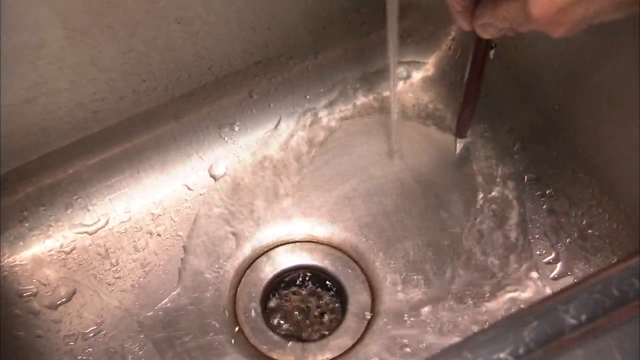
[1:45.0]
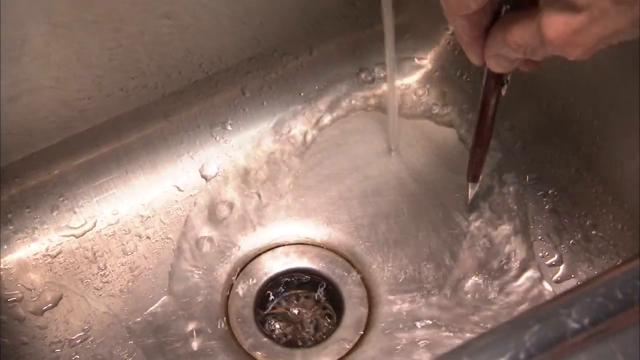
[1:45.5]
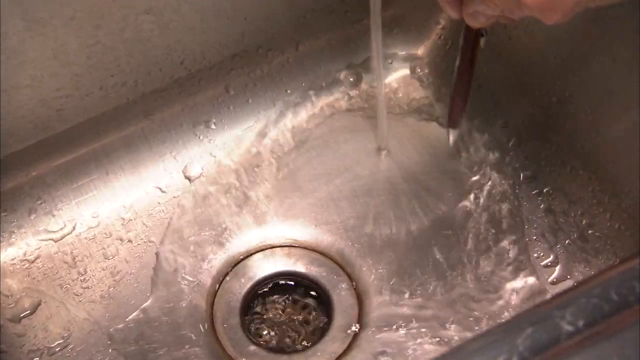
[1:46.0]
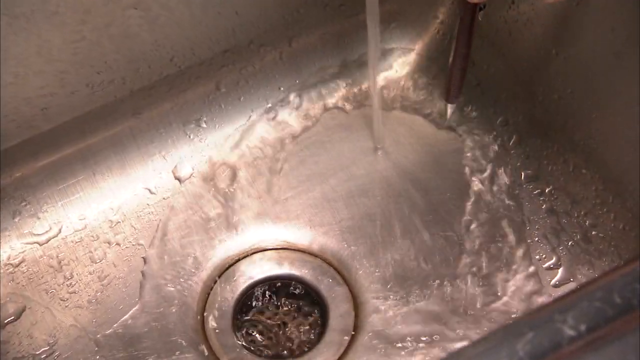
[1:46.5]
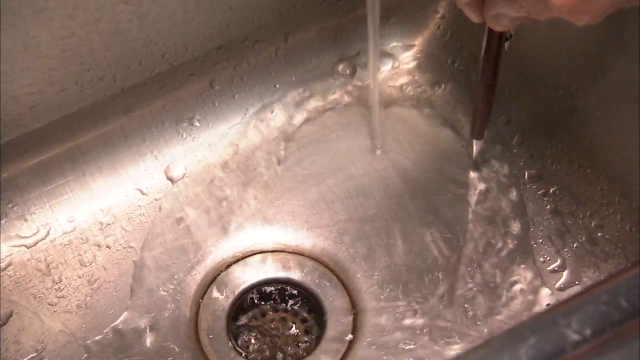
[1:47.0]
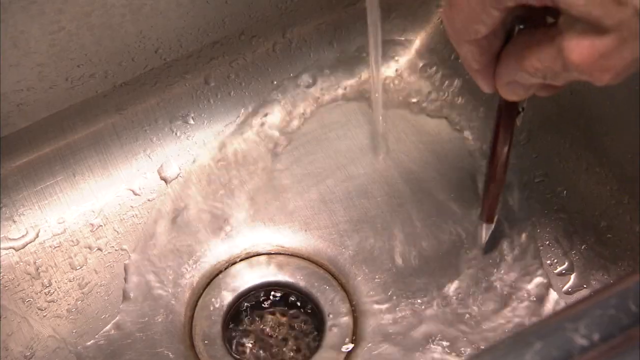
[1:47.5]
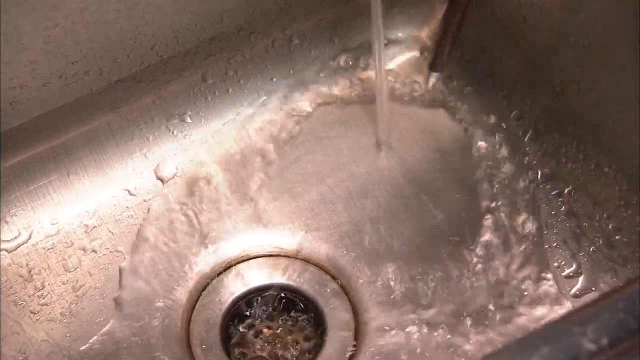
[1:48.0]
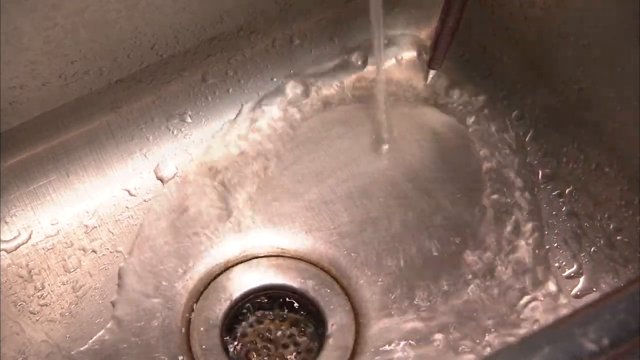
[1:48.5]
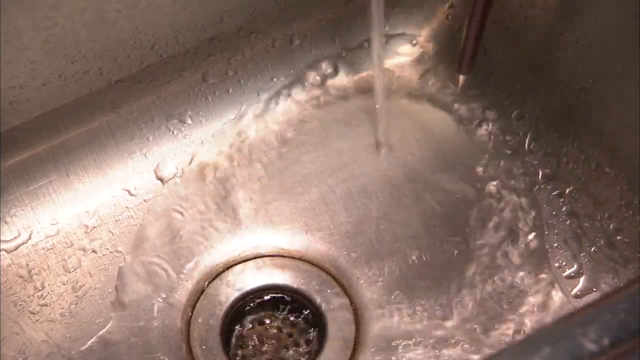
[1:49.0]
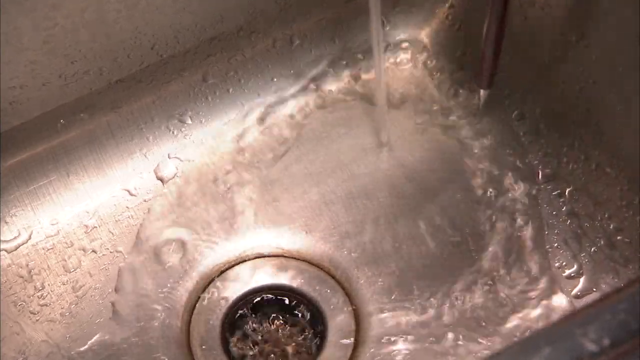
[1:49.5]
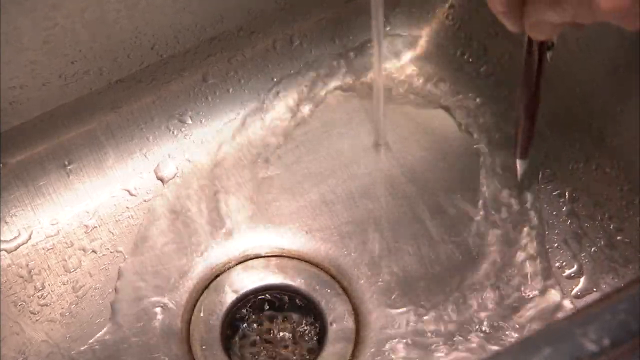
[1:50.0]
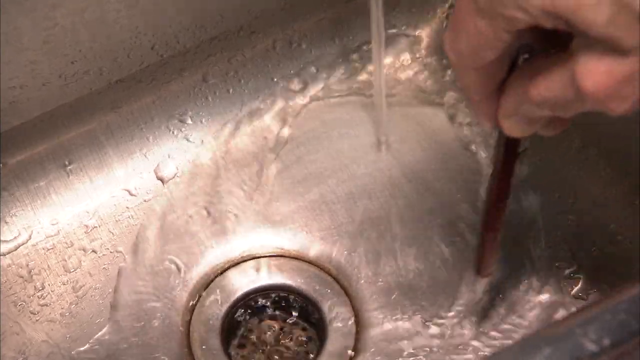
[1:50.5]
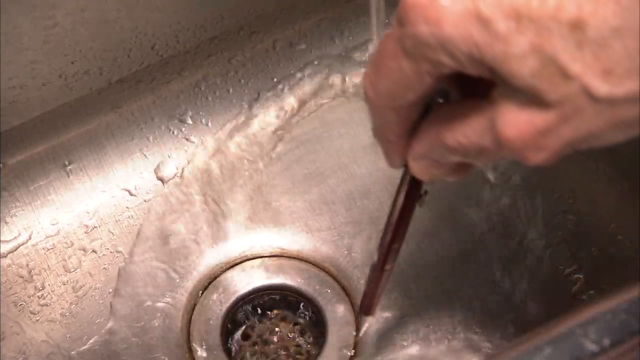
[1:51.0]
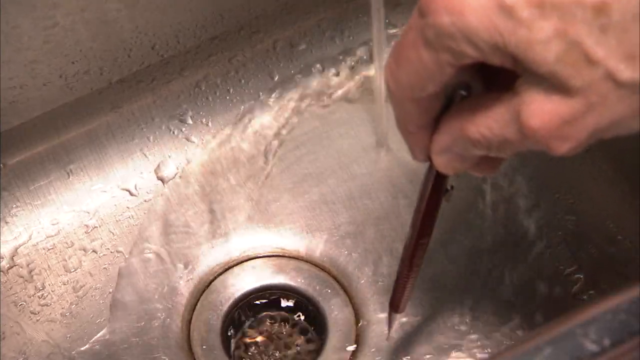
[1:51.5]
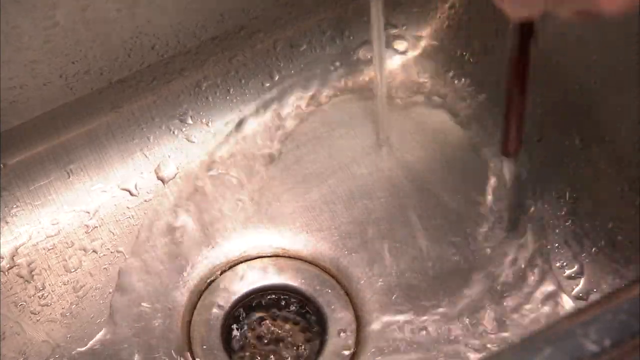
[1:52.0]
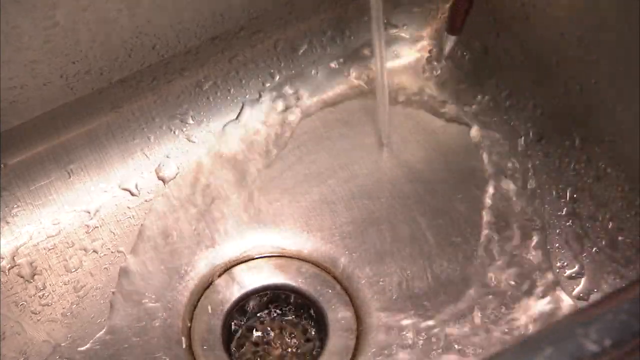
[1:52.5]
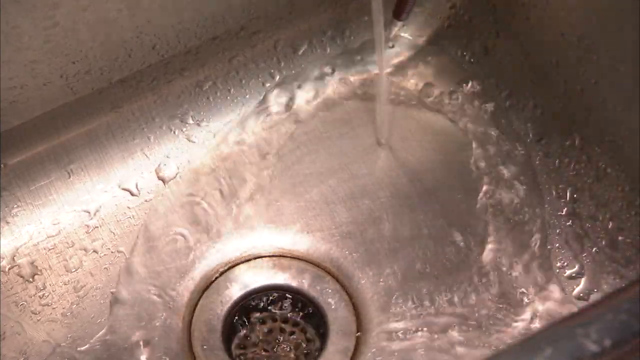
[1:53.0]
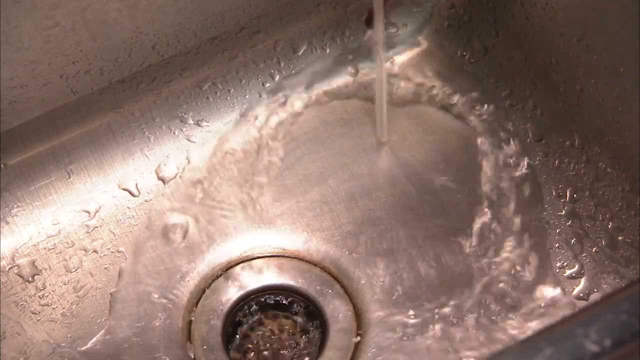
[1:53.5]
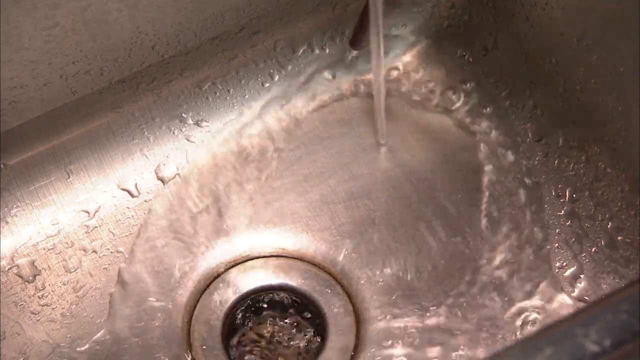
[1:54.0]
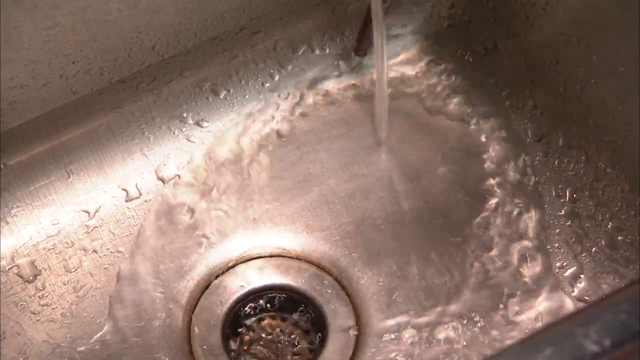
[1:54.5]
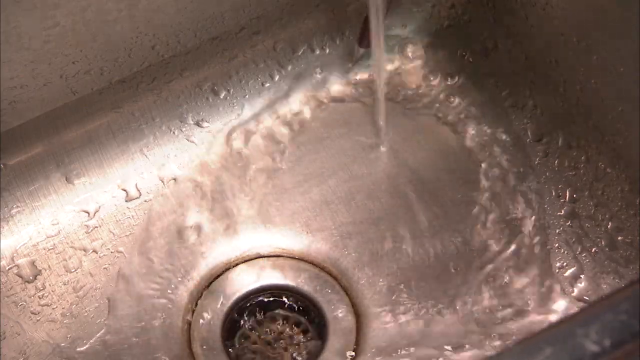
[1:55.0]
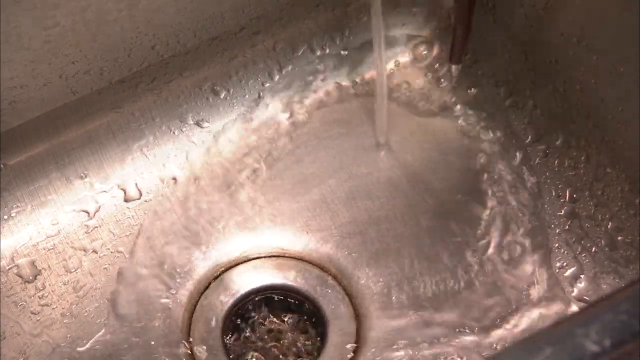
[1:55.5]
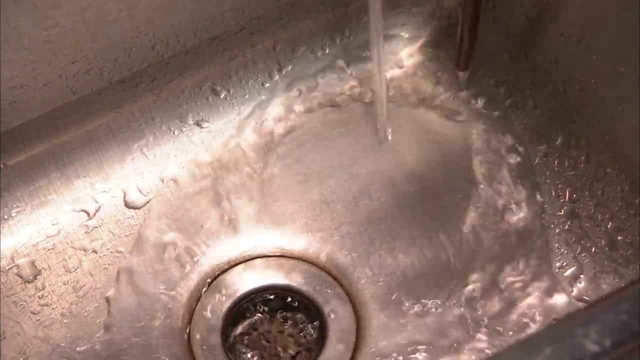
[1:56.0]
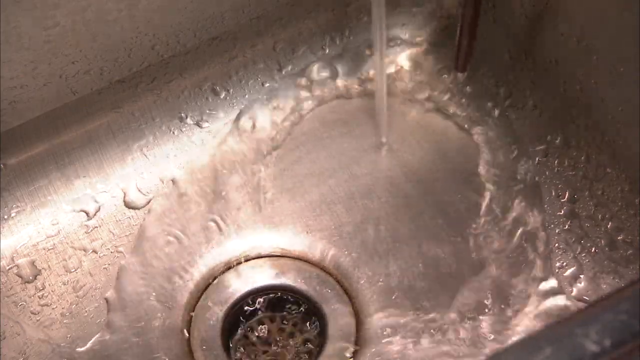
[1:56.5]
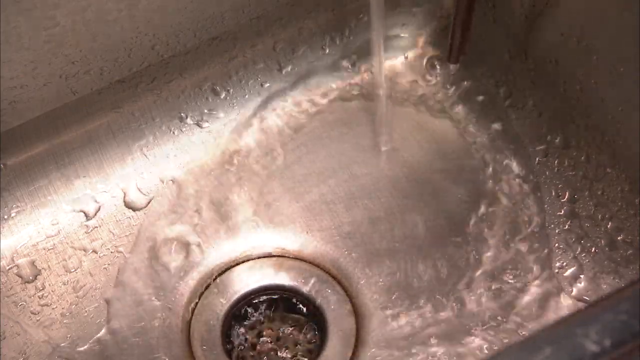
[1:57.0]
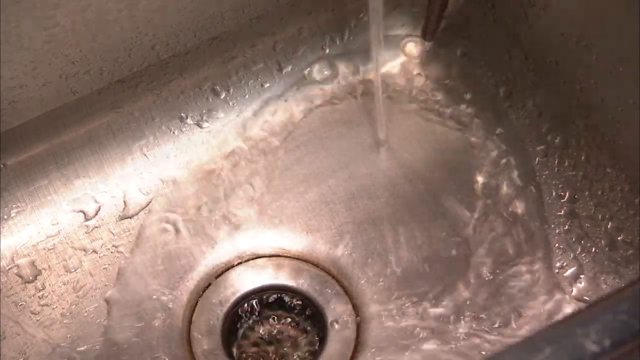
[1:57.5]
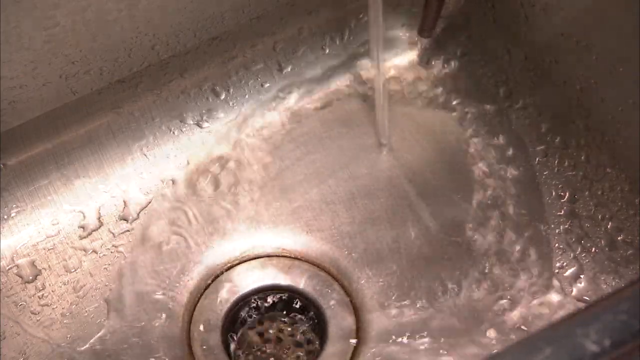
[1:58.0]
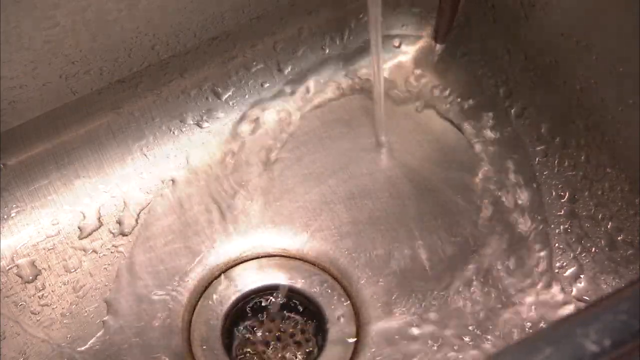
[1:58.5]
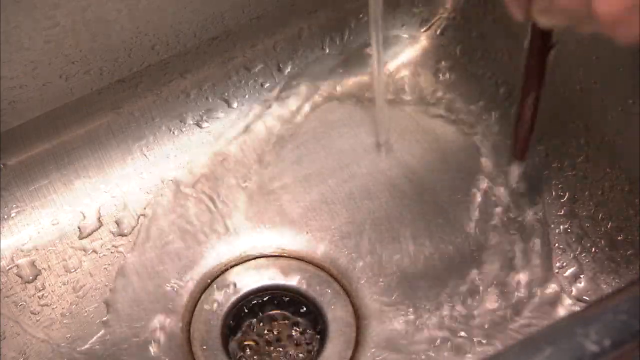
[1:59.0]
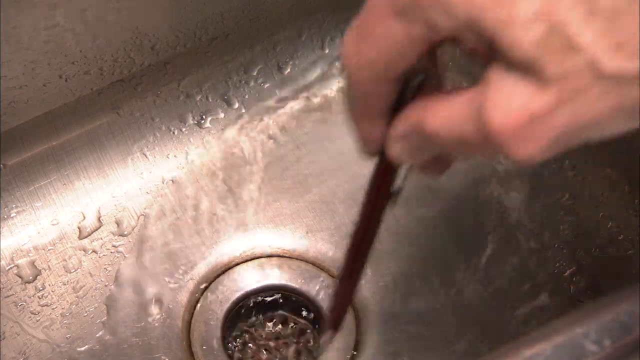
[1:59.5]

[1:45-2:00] Water runs continuously into the sink and down the circular drain; it is a lot of water. A man points to the bubbles in the water with a pen whose body is dark brown and whose tip is a silver-like color. His hand has visible veins and his skin is a peachy beige color. He moves the pen in a C-shaped pattern, mainly toward the right side of the sink.